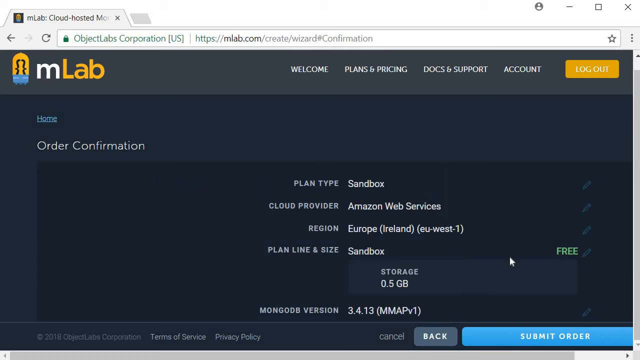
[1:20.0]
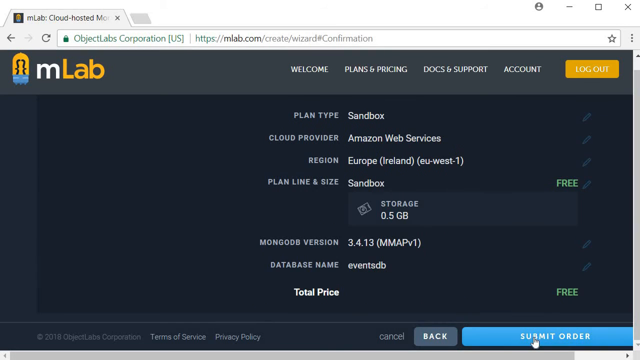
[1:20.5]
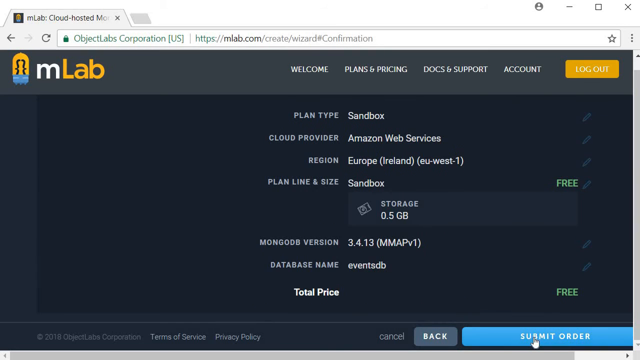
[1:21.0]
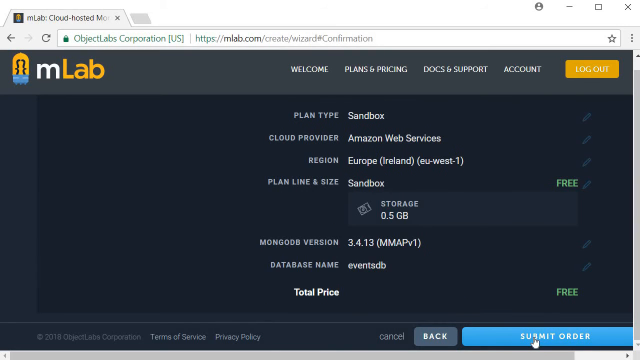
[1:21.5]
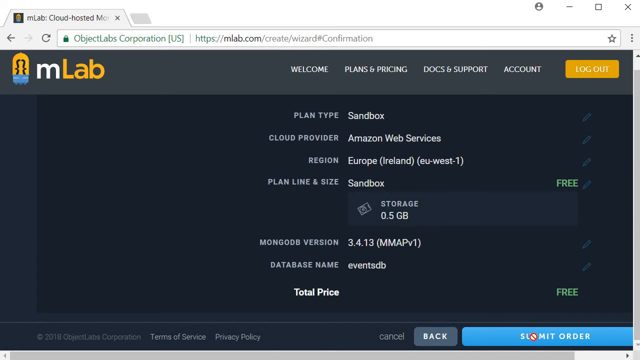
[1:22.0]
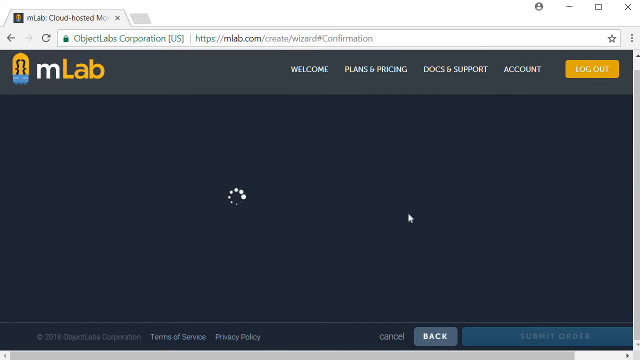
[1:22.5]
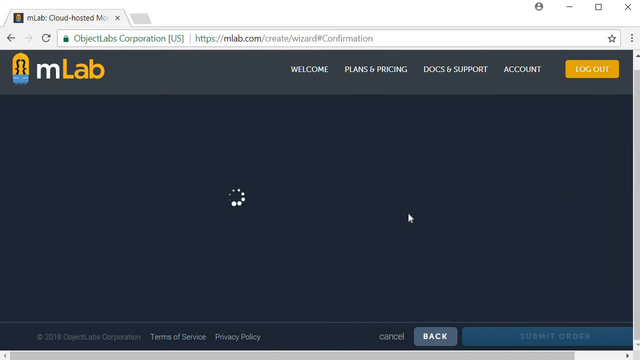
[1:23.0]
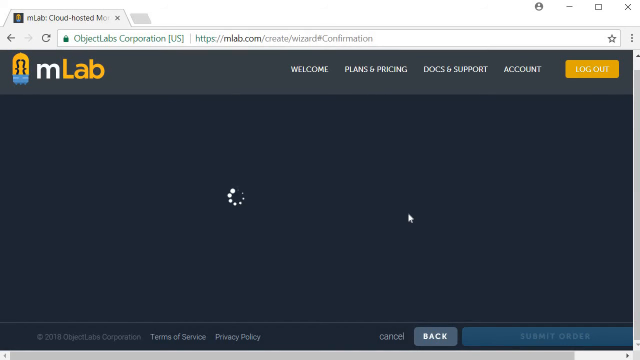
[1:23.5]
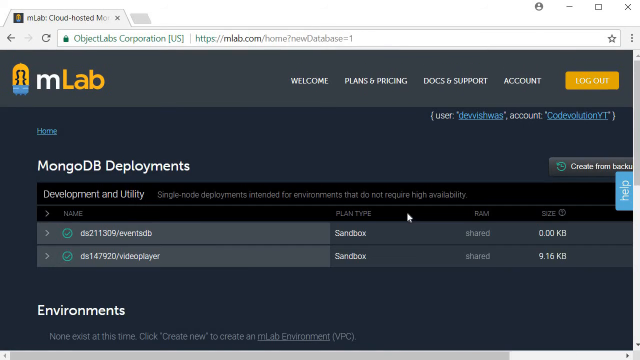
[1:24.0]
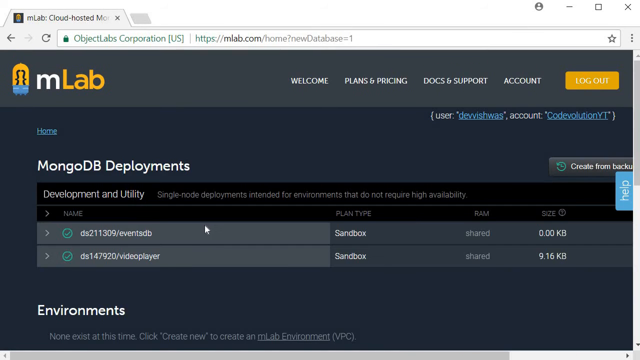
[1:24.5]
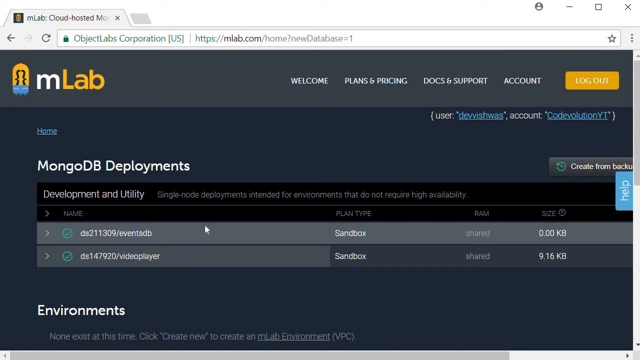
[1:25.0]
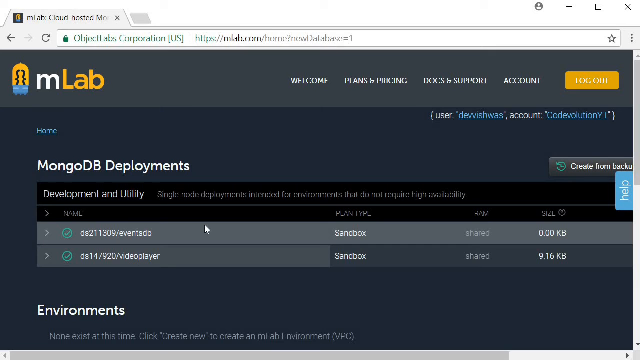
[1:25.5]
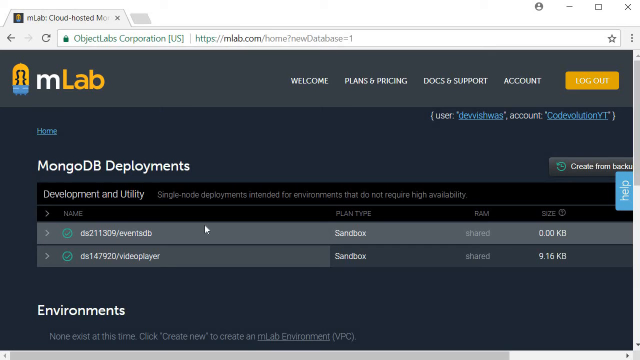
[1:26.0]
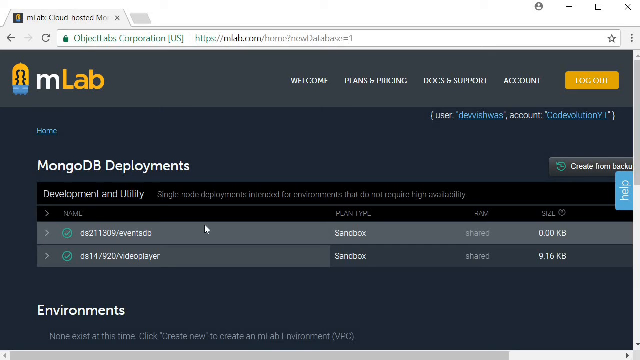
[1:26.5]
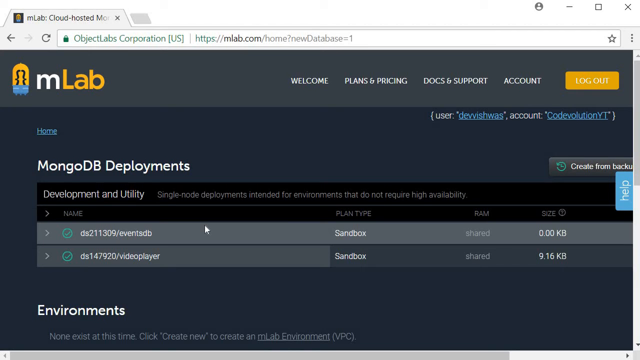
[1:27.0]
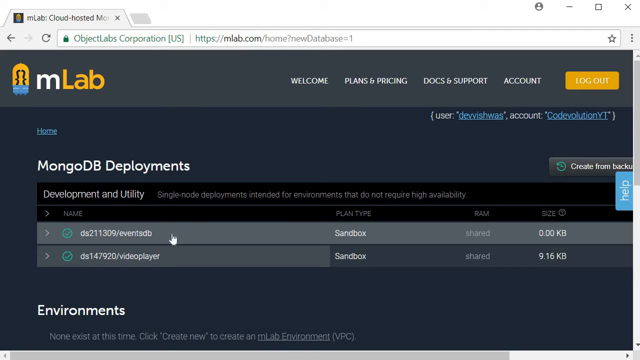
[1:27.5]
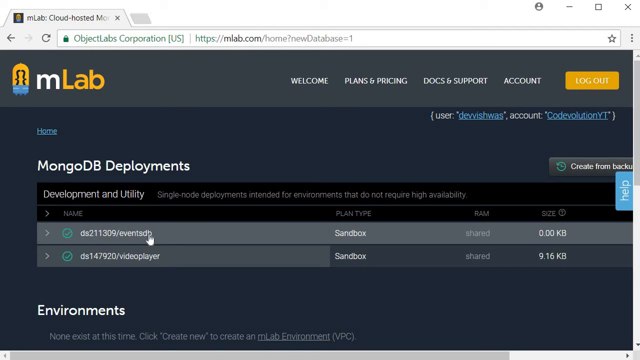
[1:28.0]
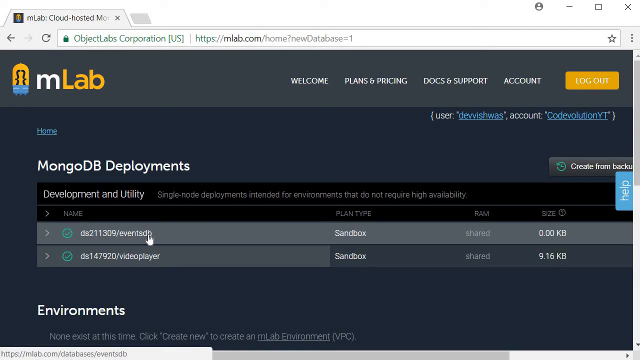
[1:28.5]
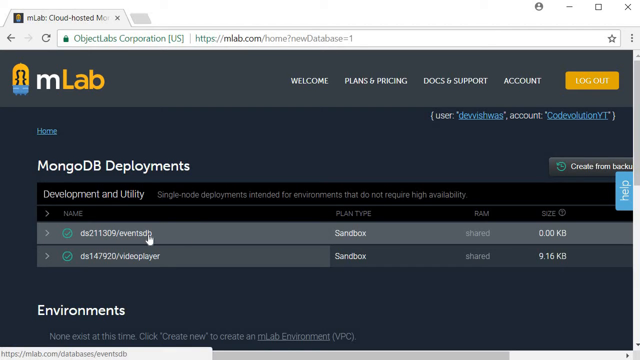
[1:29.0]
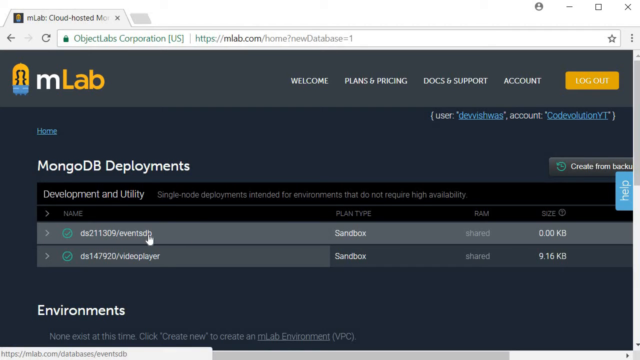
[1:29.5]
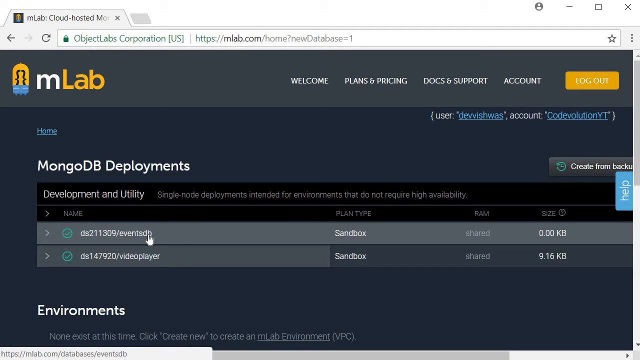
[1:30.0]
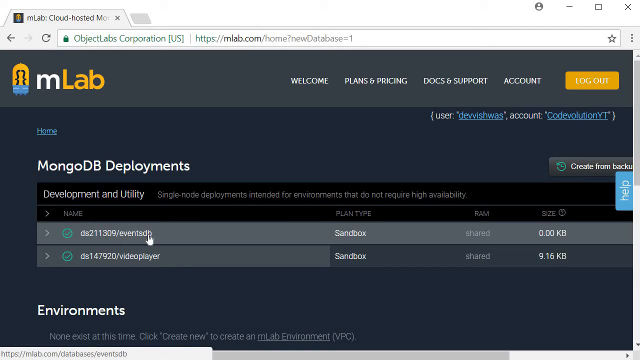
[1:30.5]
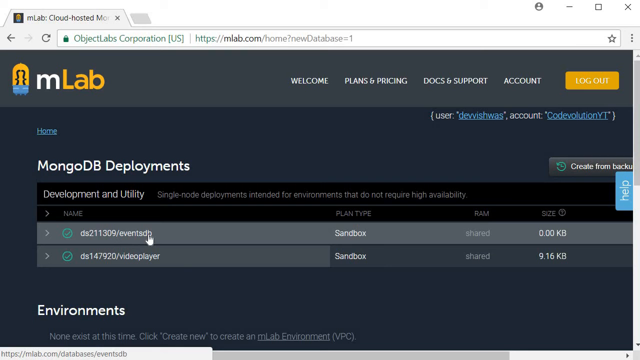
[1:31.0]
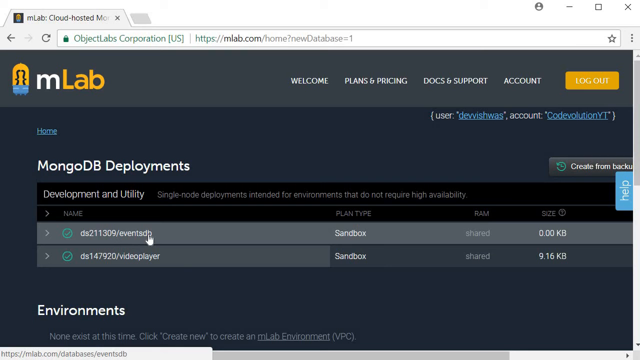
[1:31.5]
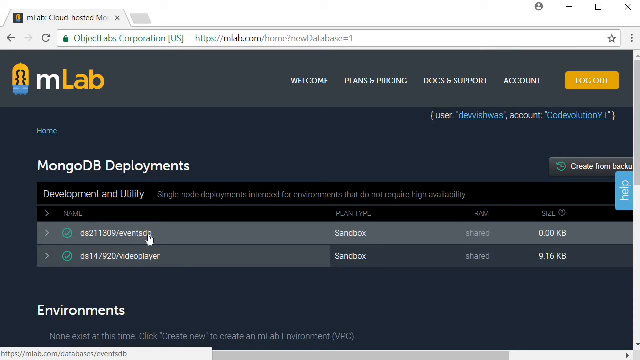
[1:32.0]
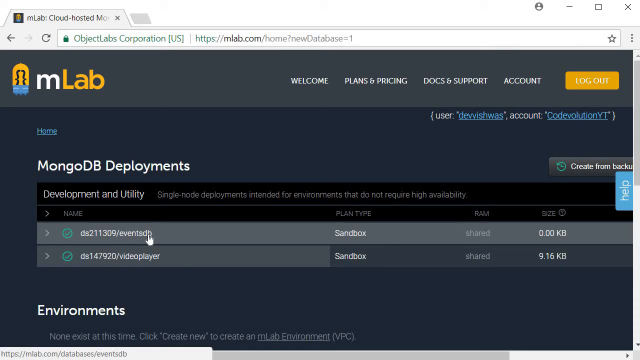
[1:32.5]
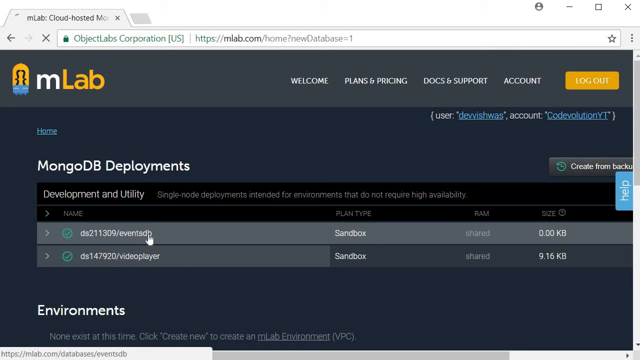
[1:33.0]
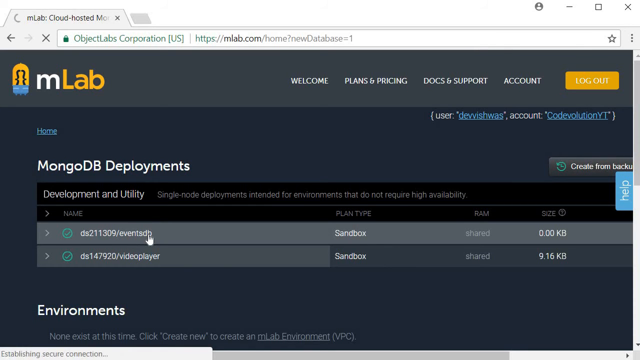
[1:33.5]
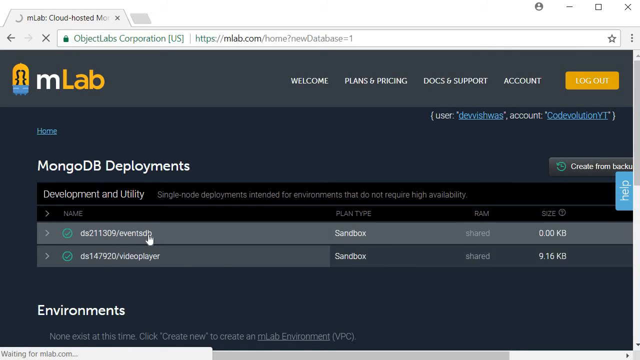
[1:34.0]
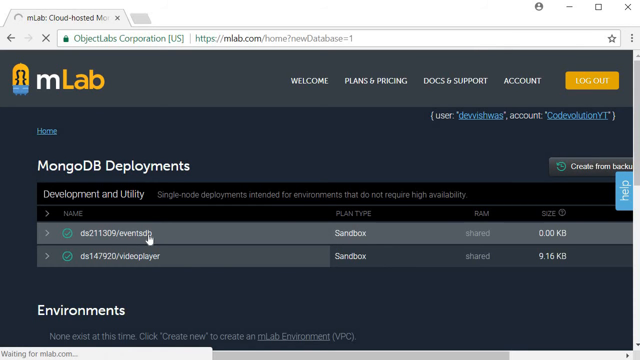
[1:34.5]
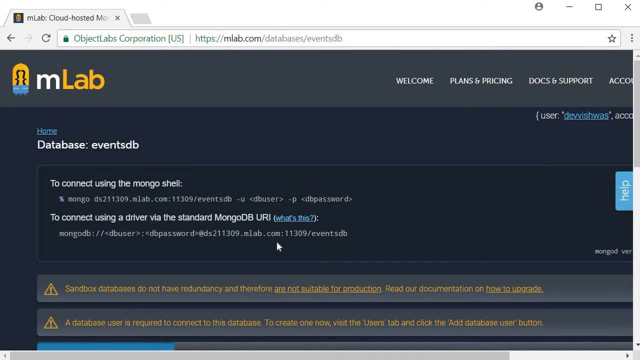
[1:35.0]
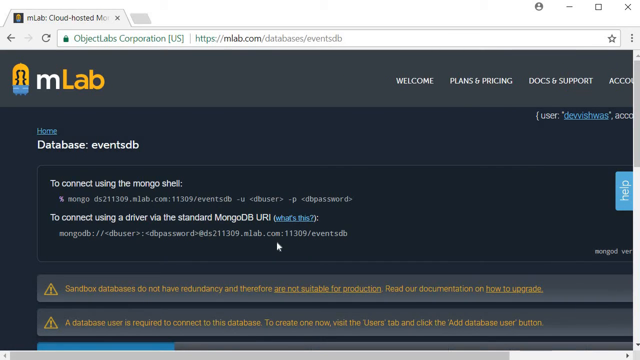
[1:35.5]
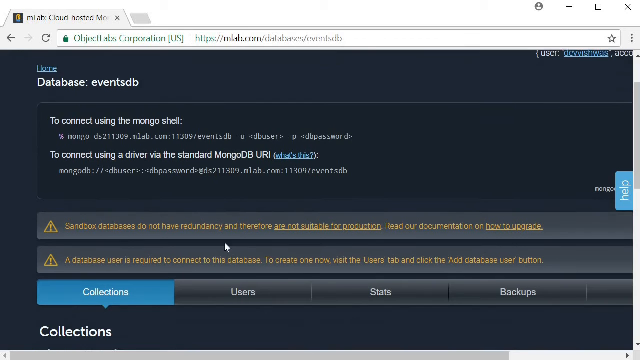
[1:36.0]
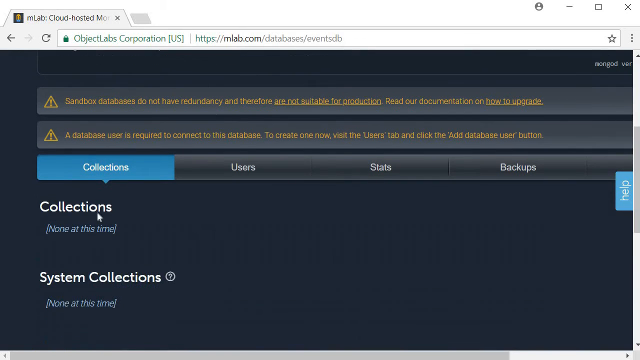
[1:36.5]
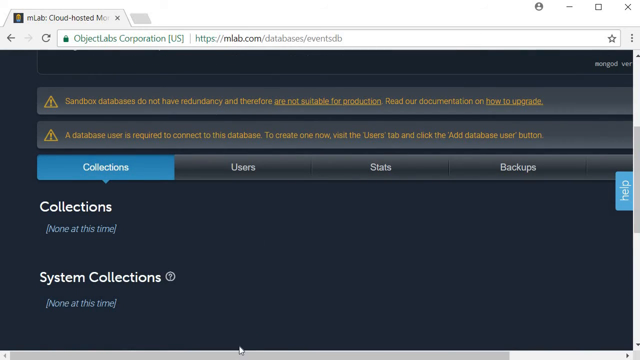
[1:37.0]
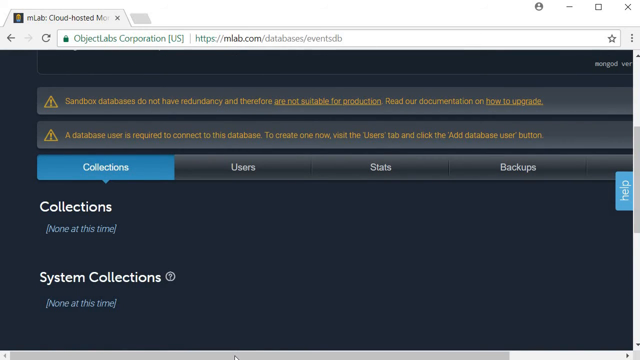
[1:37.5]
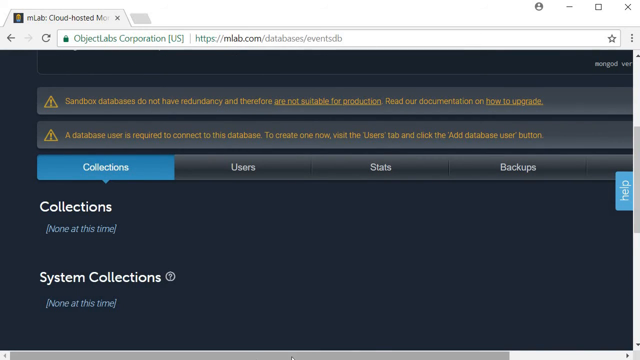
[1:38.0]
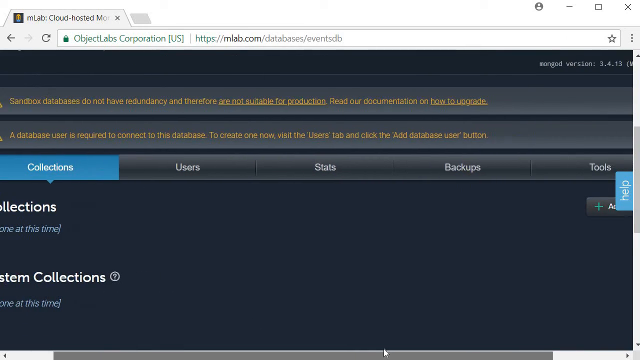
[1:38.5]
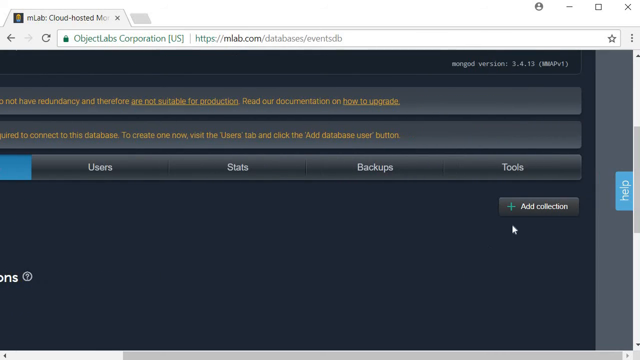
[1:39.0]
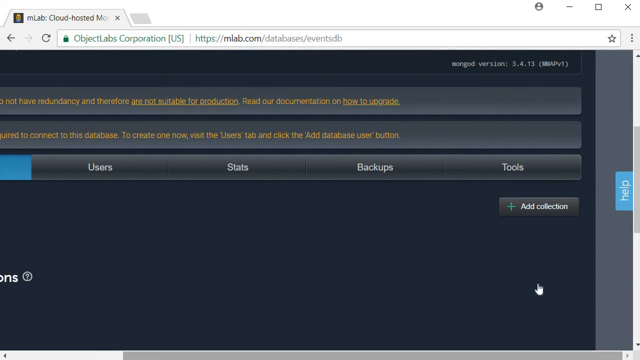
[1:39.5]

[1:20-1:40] An order confirmation page for the website mlab.com appears, with a dark blue background and a gray bar at the top showing the MLab logo on the left and a yellow logout button on the right. Beneath this, white text reads "order confirmation", with a darker blue box showing the order details: plan type sandbox, cloud provider Amazon Web Services, region Europe, Ireland, and plan line and size sandbox. The user scrolls down and clicks a blue button reading "Submit Order". The screen loads for a moment. Afterward, white text reading "MongoDB deployments" is front and center, with "development and utility" underneath and three rows below, each with an arrow on its left. The top row shows the column labels in black with dark gray text, and two deployments are in the gray rows beneath it: the first named "ds211309/eventsdb" and below it "ds147920/videoplayer". The user clicks the eventsdb deployment. The screen cuts to a page labeled "database events DB". Text at the top indicates that to connect using the mongo shell, the code beneath it can be pasted in. Below that are several warning bars reading "Sandbox databases do not have redundancy and therefore not suitable for production."